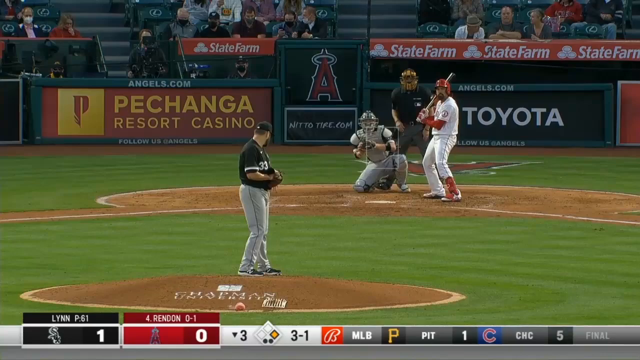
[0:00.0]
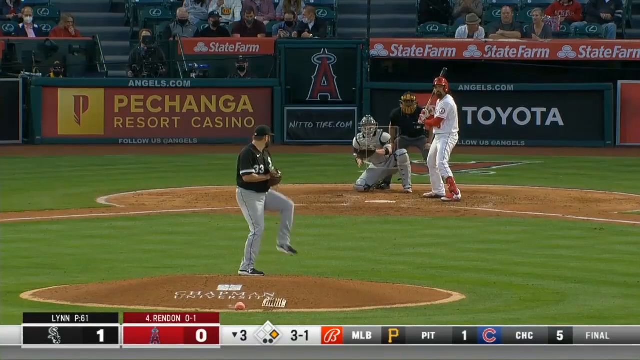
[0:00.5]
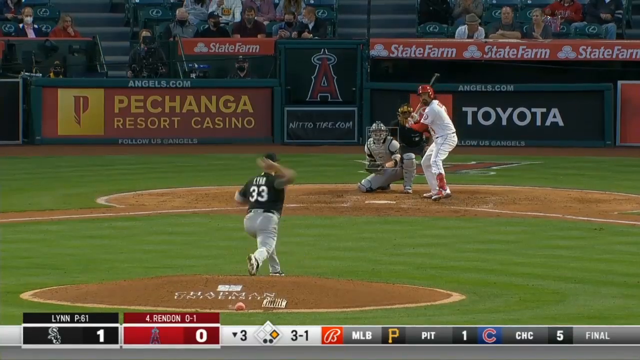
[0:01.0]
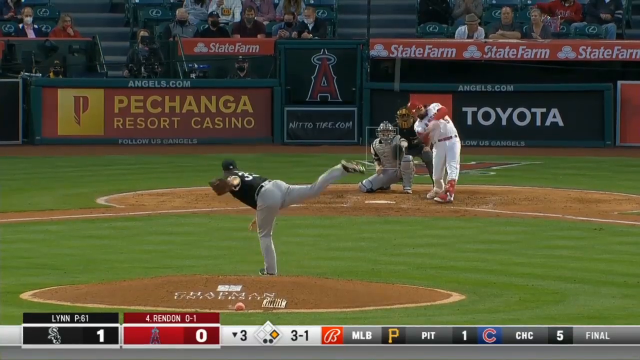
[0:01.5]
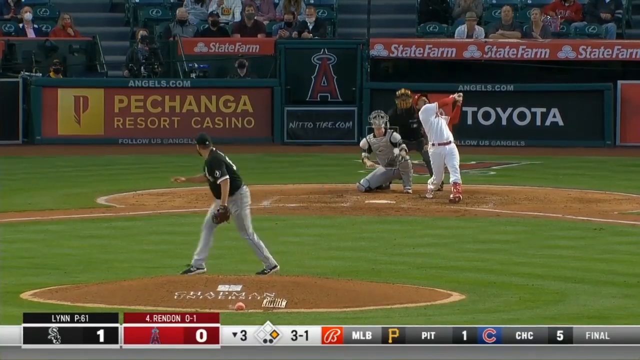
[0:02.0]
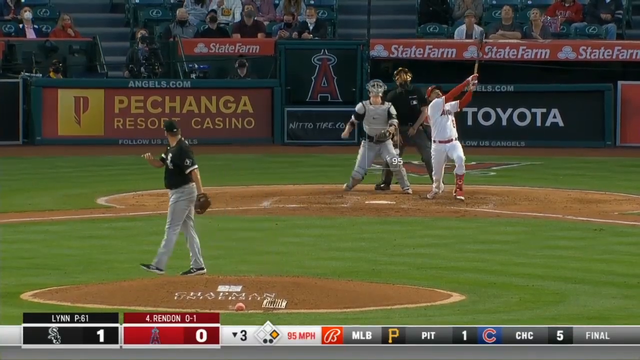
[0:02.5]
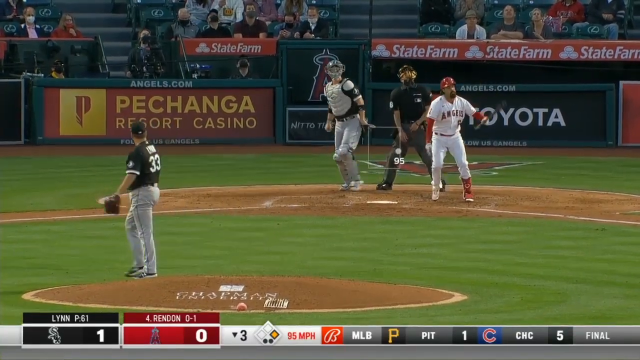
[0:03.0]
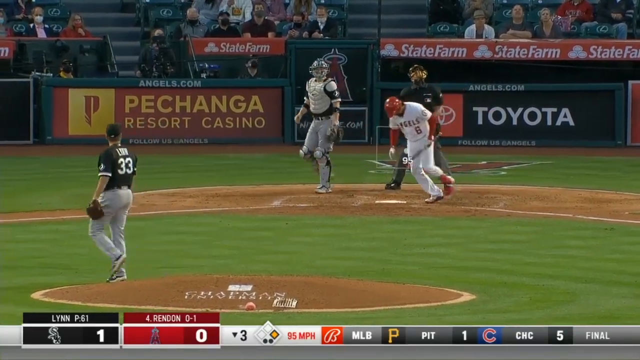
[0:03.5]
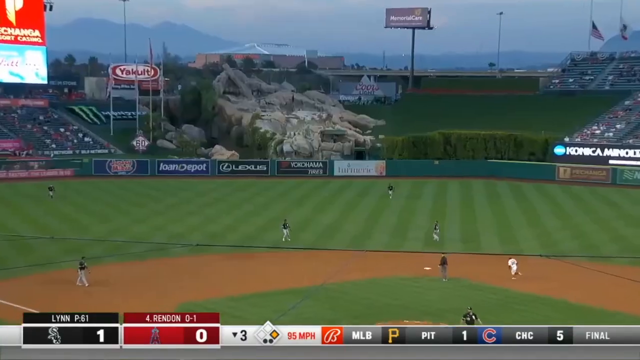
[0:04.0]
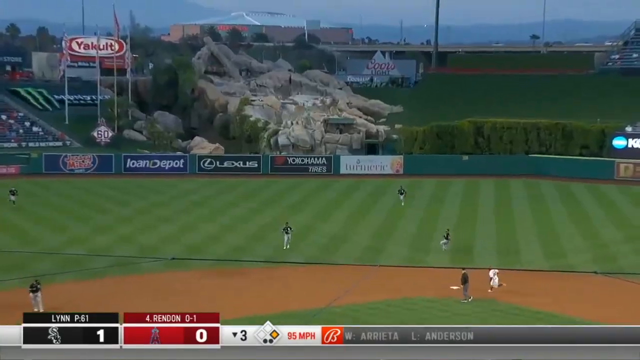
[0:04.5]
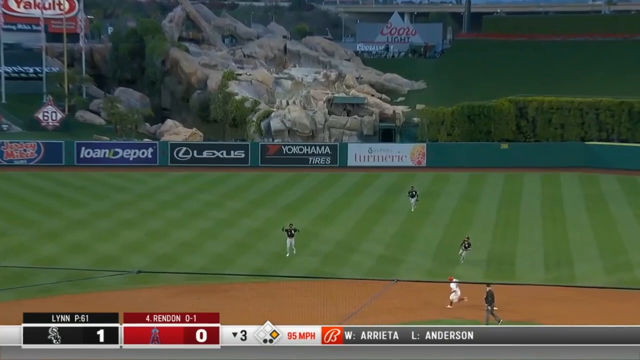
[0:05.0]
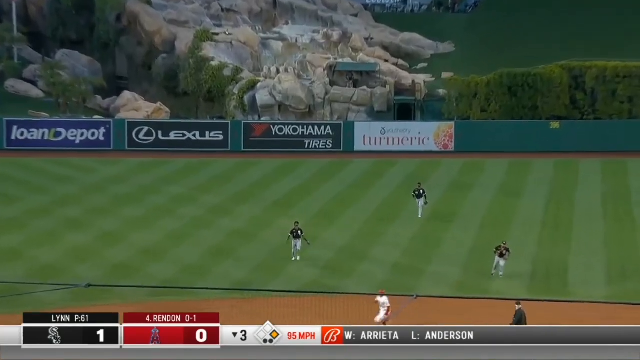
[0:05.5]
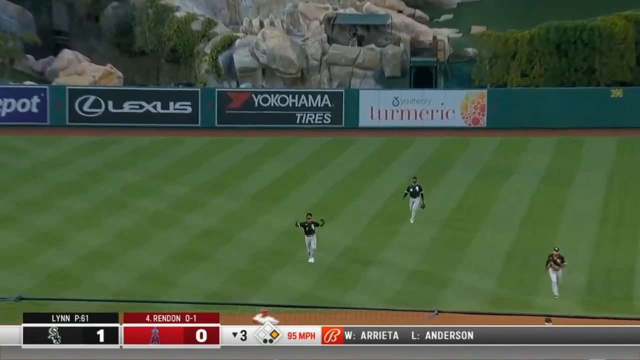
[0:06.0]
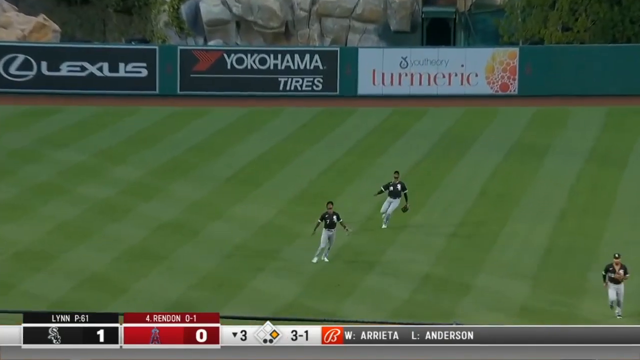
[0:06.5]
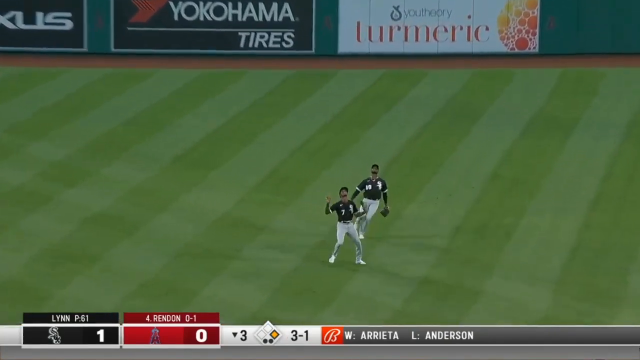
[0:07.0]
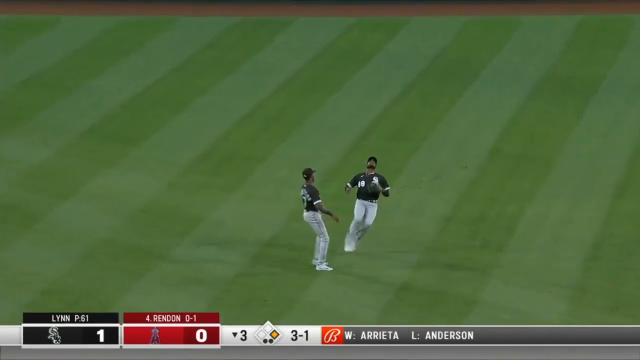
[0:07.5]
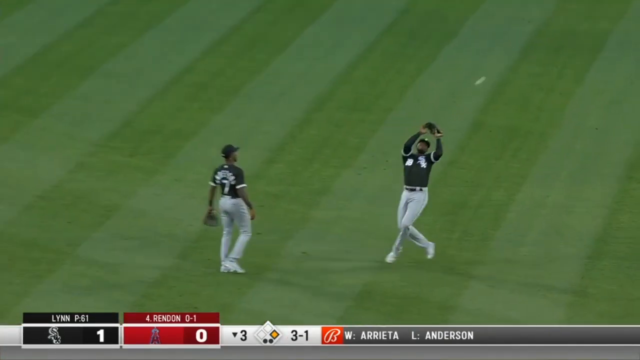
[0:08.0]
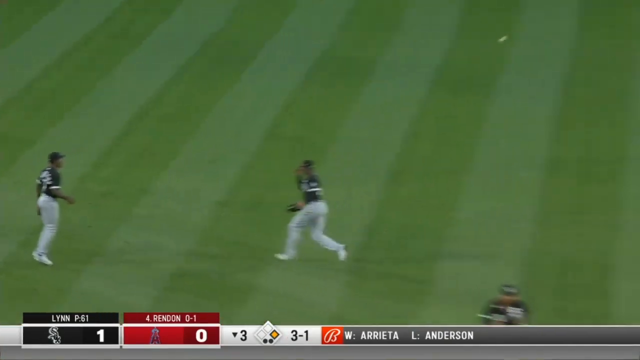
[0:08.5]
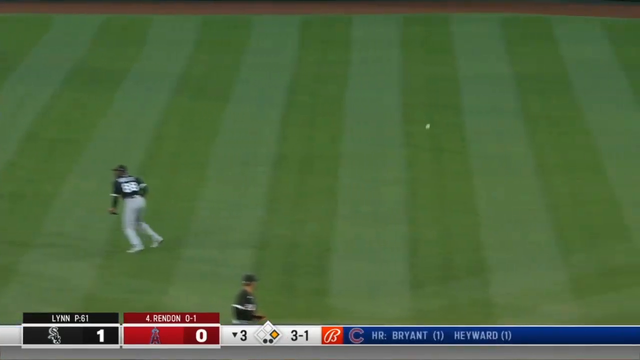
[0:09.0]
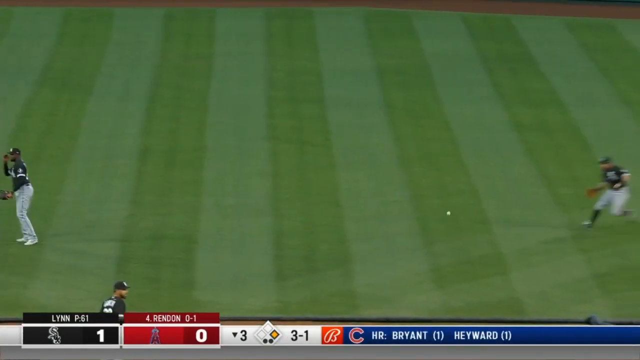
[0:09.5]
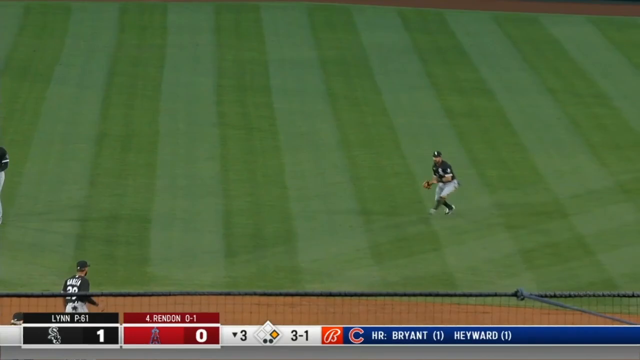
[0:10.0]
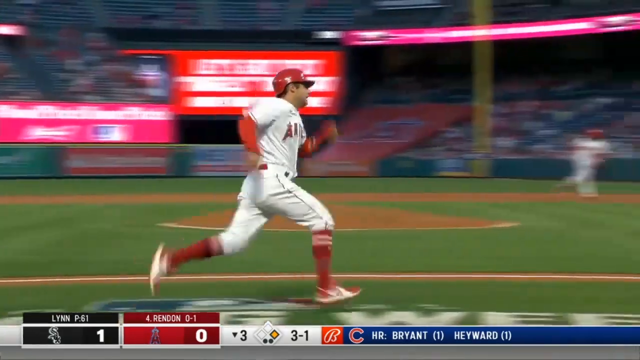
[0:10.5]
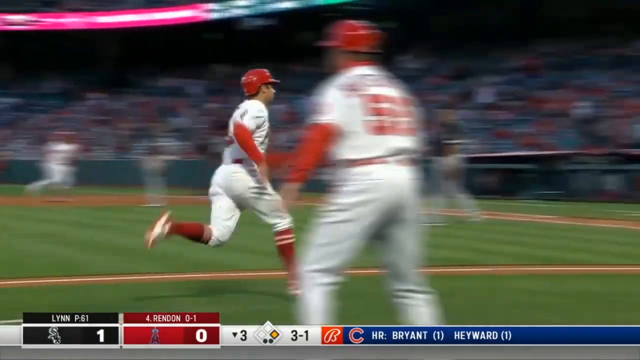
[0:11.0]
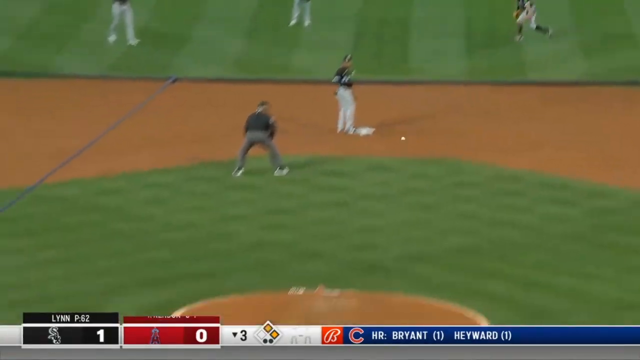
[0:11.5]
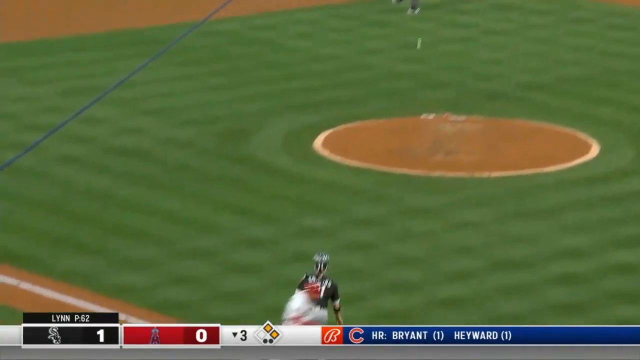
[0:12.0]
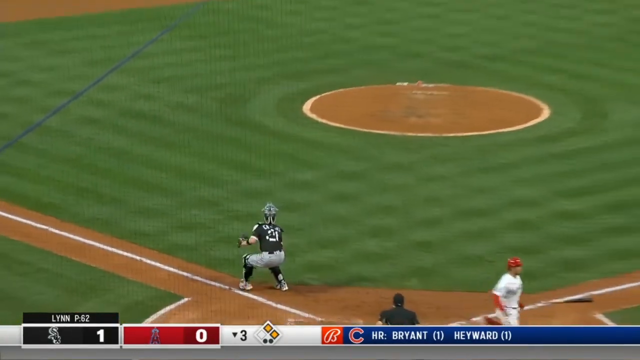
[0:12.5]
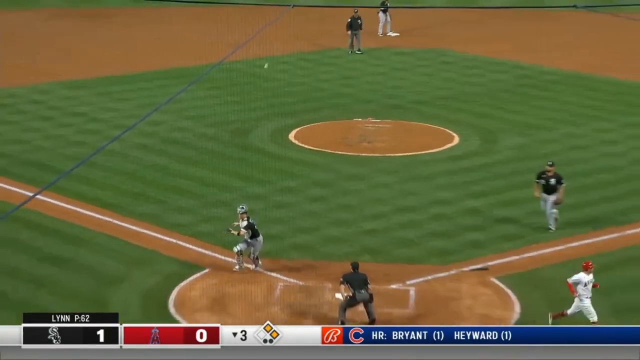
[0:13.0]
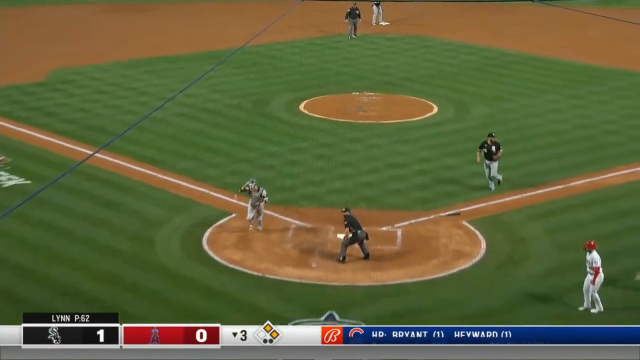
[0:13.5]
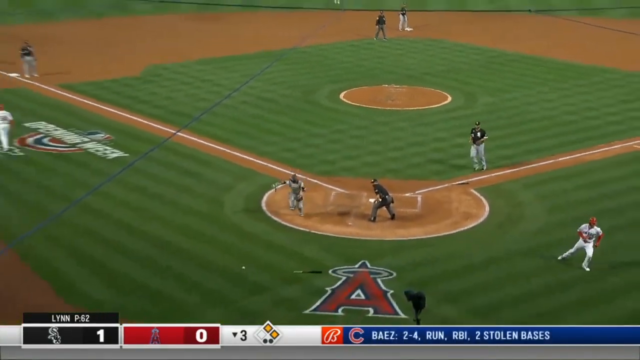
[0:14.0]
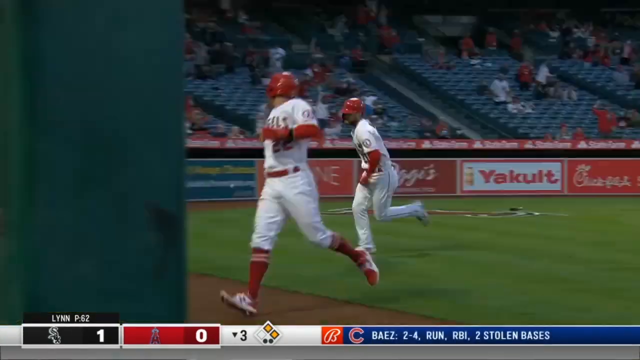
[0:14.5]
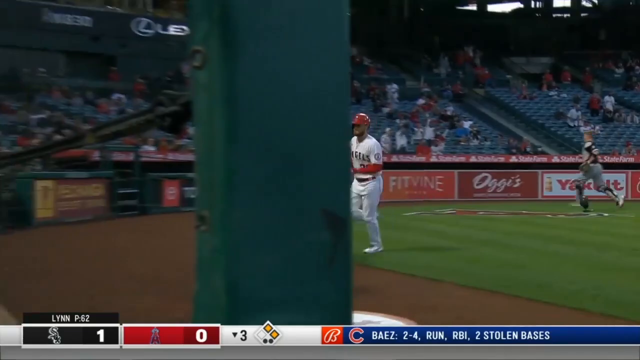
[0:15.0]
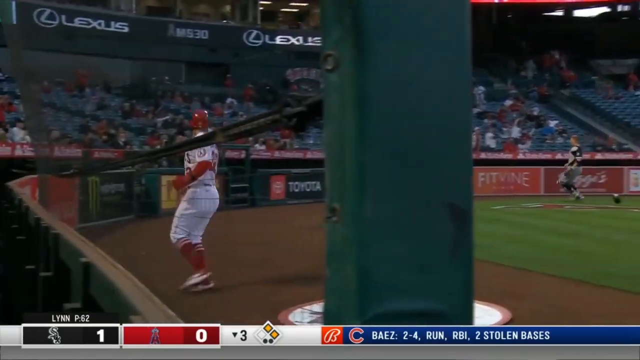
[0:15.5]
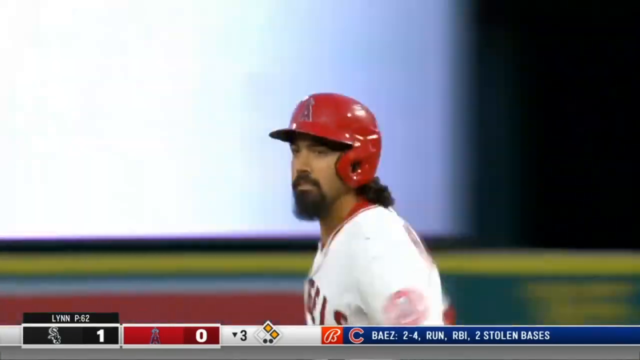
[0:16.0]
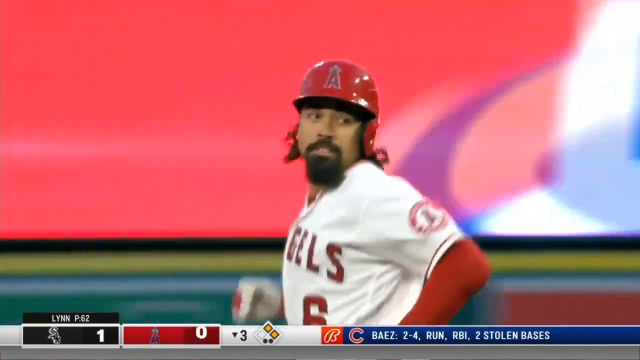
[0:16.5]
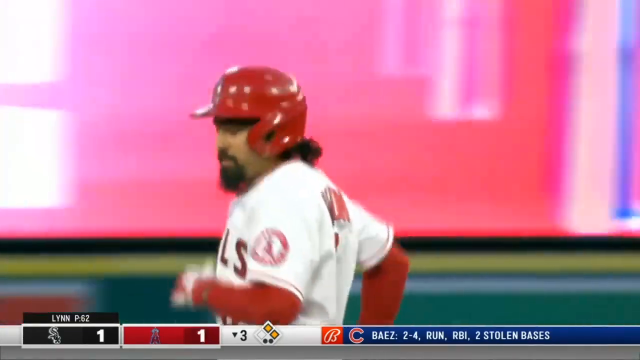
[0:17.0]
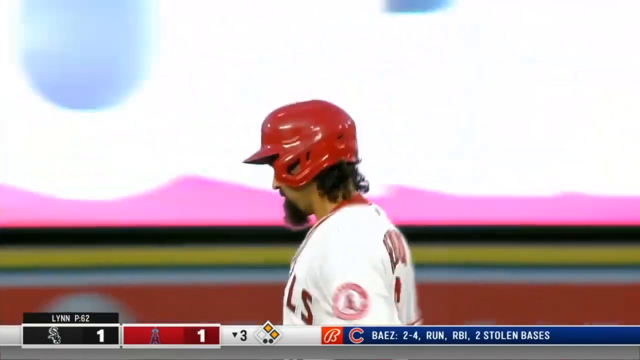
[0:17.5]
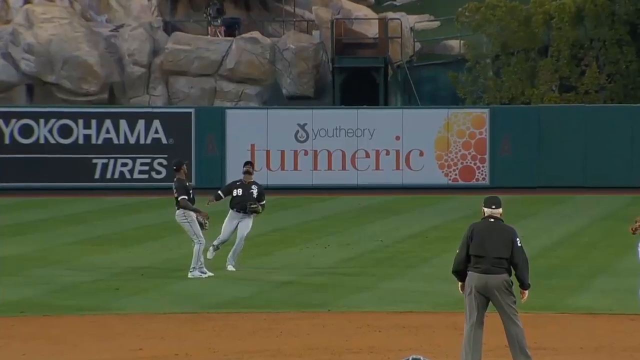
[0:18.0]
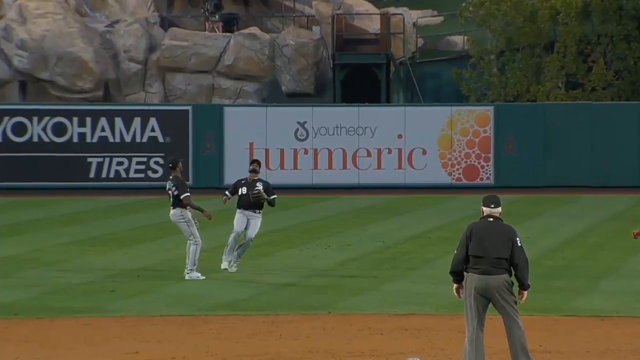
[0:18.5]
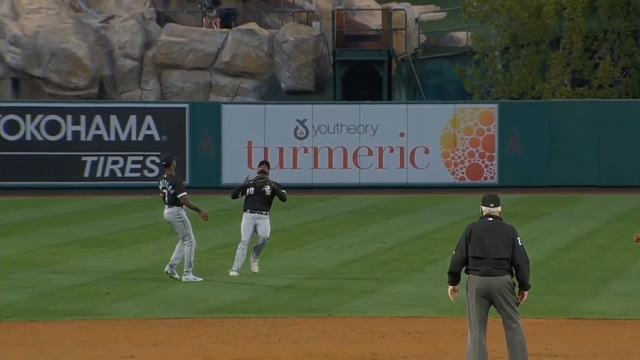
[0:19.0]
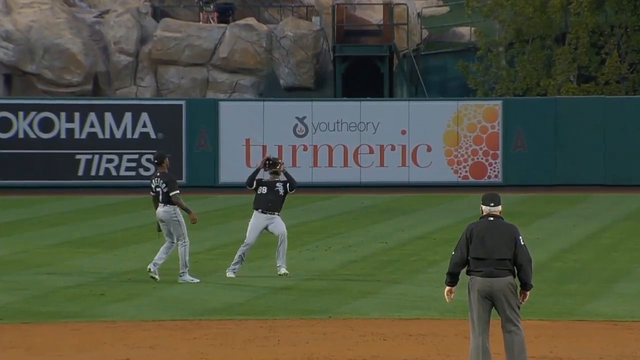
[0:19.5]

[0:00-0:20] The video is from an MLB game, apparently the White Sox versus the Angels. The White Sox pitcher is on the mound, seen from a backside angle. The batter, an Los Angeles Angels player, wears a white and red uniform and a red helmet and has both hands on the bat. The pitcher throws the pitch with his right arm, and the batter swings, hitting a pop-up fly, and keeps running. A White Sox fielder circles his arms twice, seemingly indicating he's got it, then lets his teammate try to catch the ball. The ball bounces off the teammate's glove and into the glove of another White Sox player who runs toward it. The runner runs very fast to home plate and reaches it as the ball goes flying, so the Angels player scores on a miscommunication in the White Sox outfield.